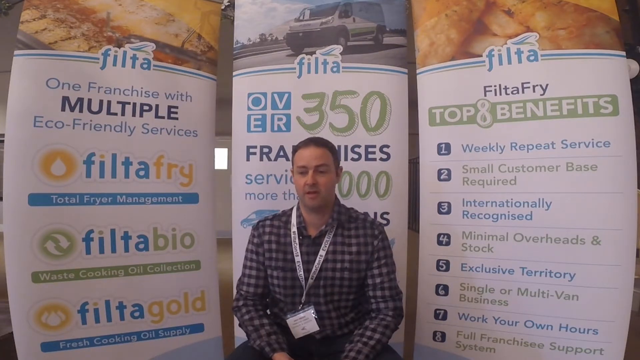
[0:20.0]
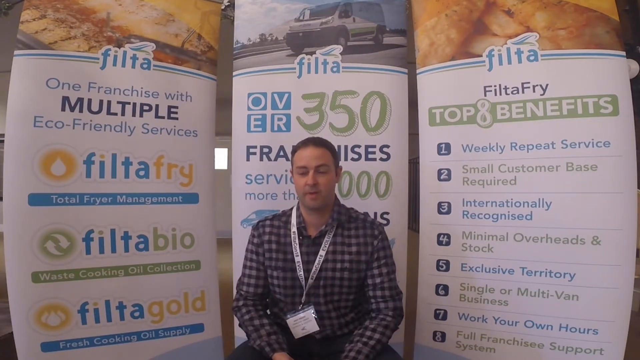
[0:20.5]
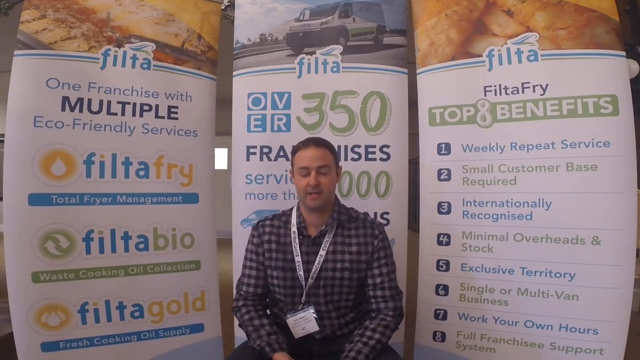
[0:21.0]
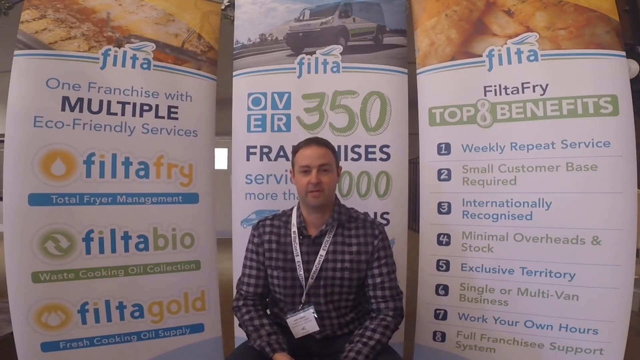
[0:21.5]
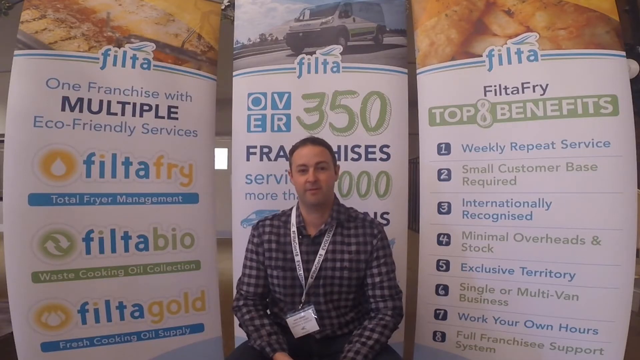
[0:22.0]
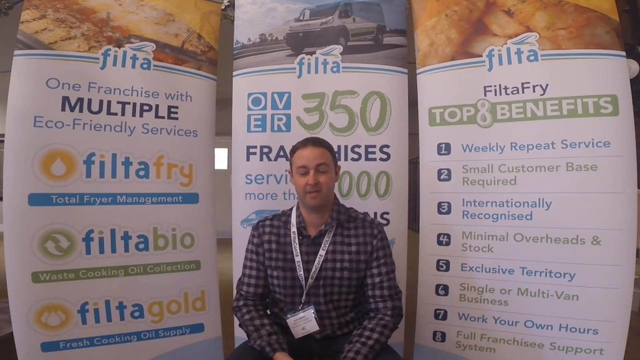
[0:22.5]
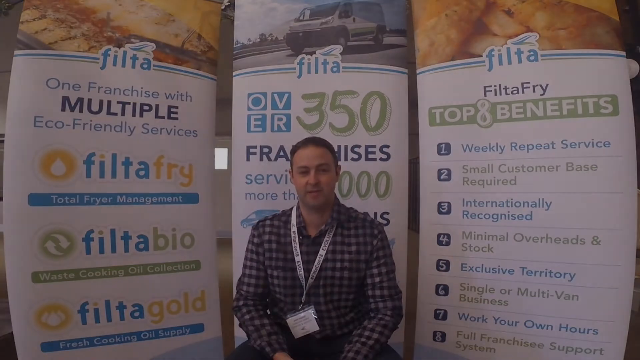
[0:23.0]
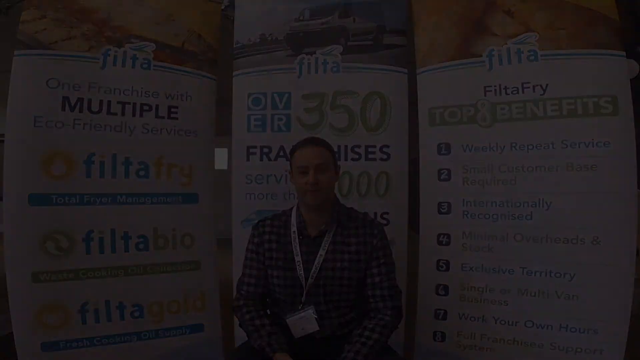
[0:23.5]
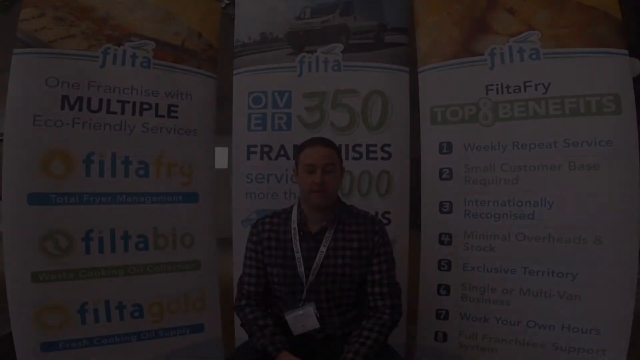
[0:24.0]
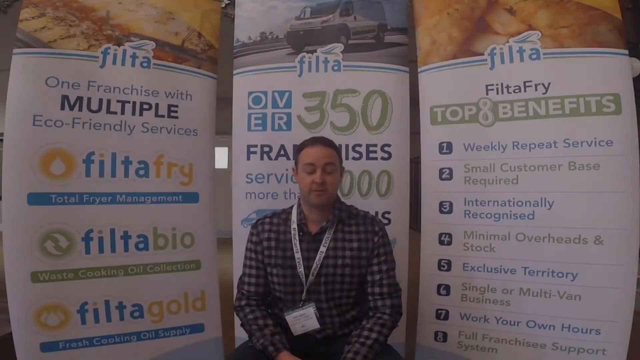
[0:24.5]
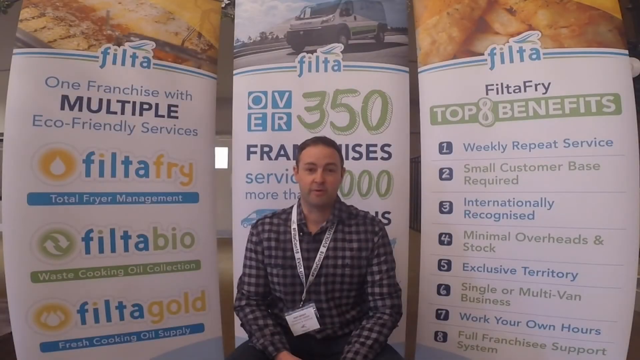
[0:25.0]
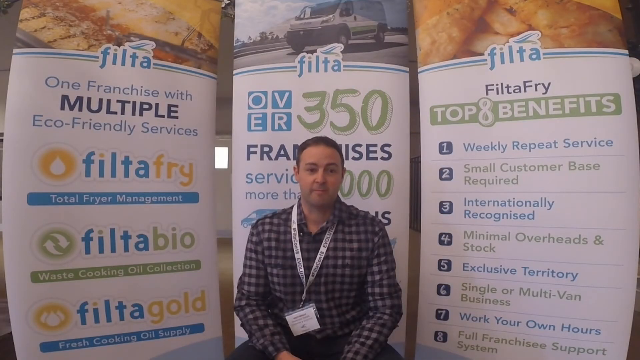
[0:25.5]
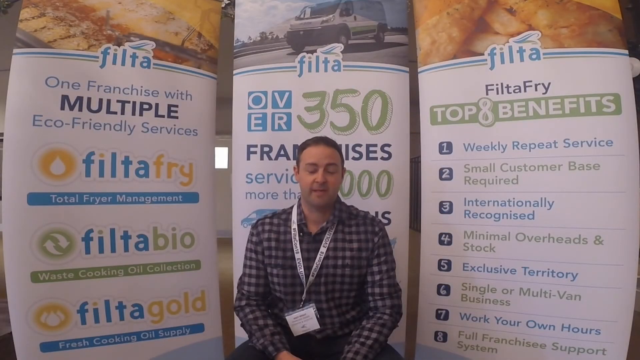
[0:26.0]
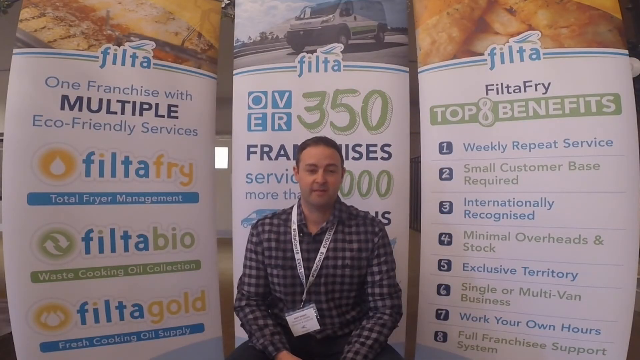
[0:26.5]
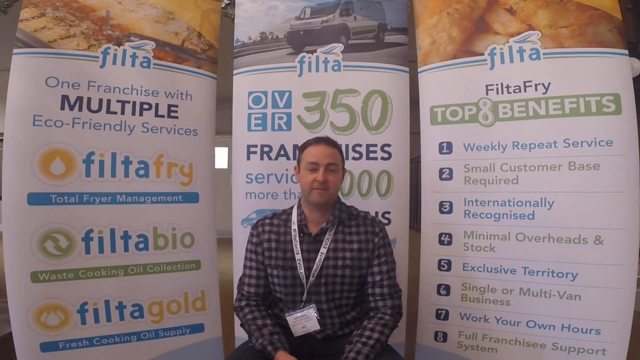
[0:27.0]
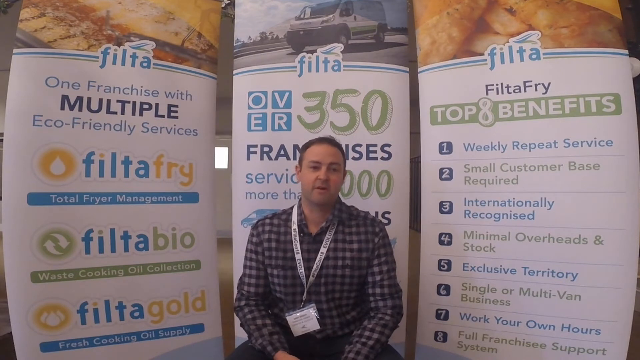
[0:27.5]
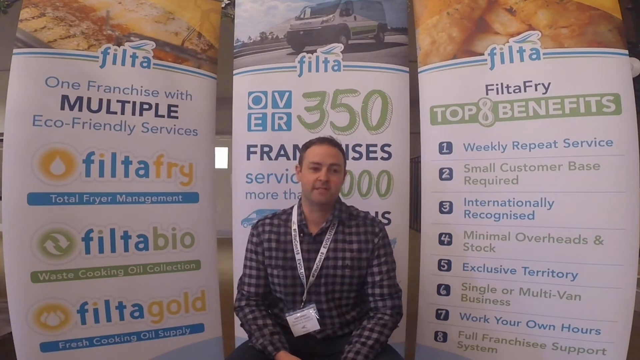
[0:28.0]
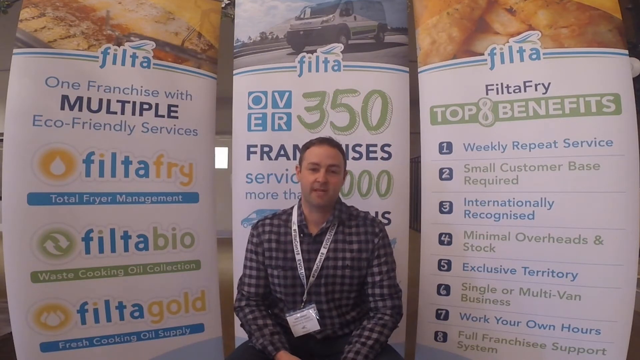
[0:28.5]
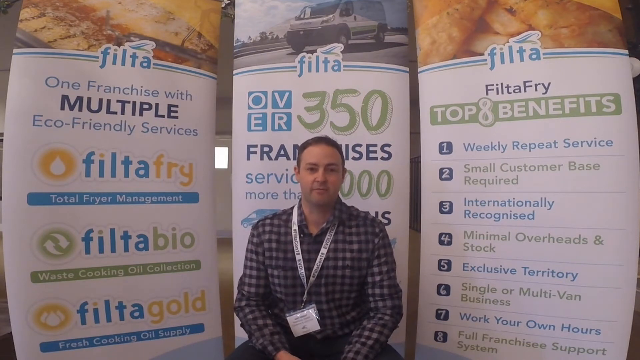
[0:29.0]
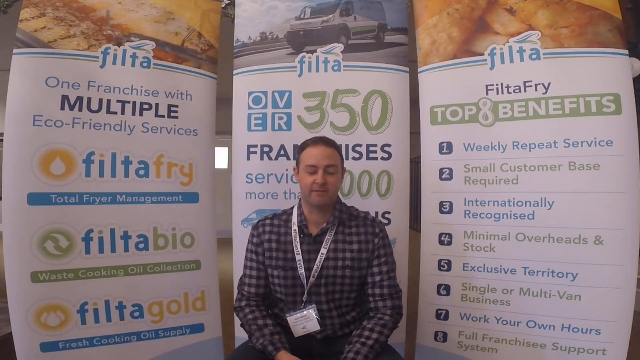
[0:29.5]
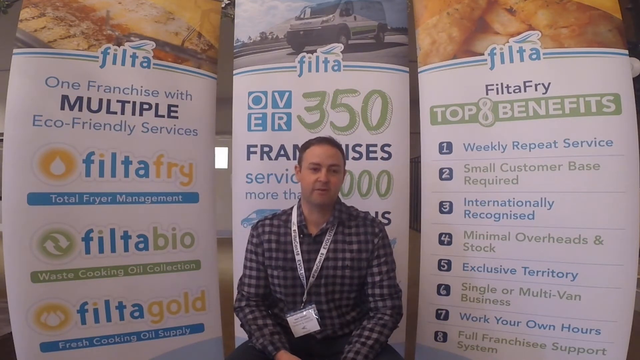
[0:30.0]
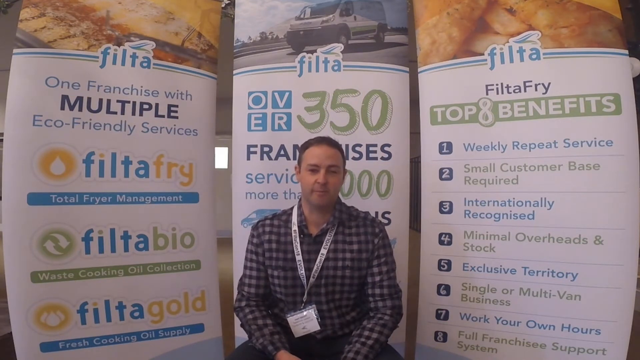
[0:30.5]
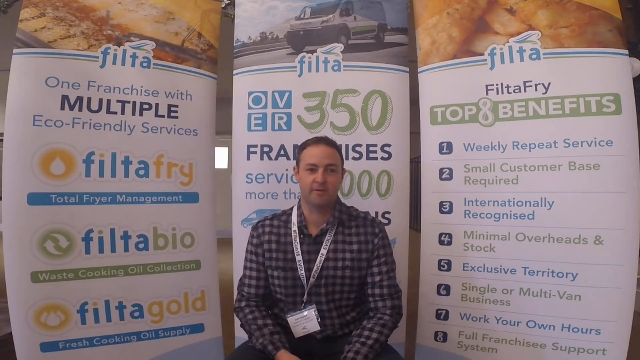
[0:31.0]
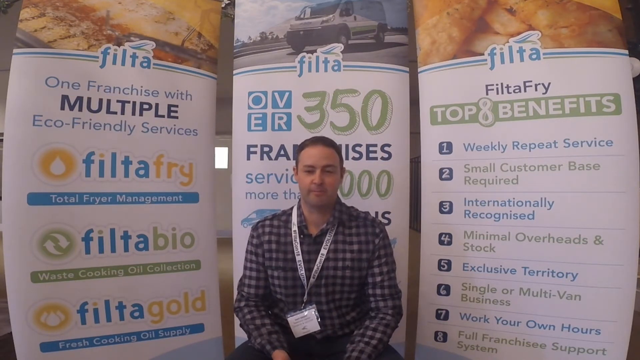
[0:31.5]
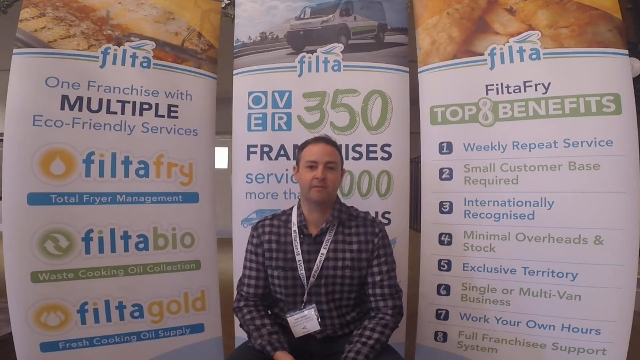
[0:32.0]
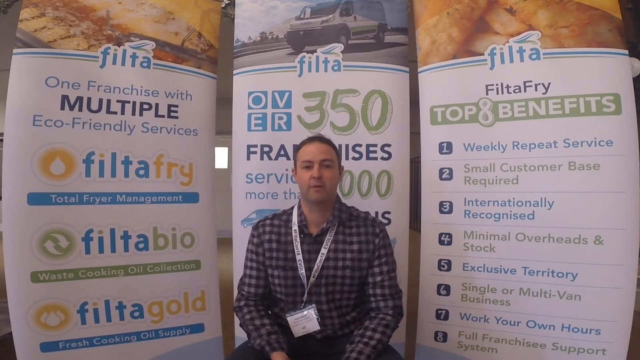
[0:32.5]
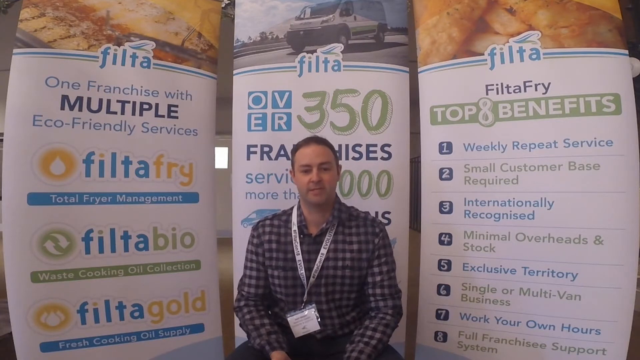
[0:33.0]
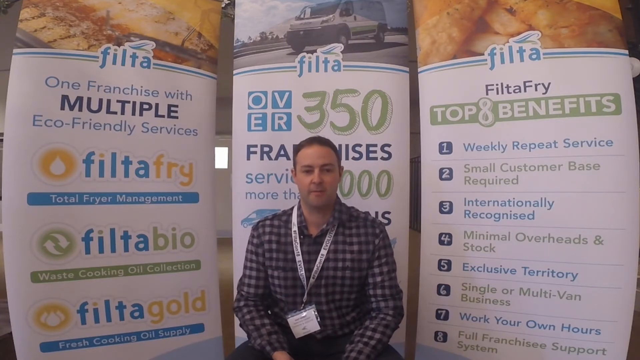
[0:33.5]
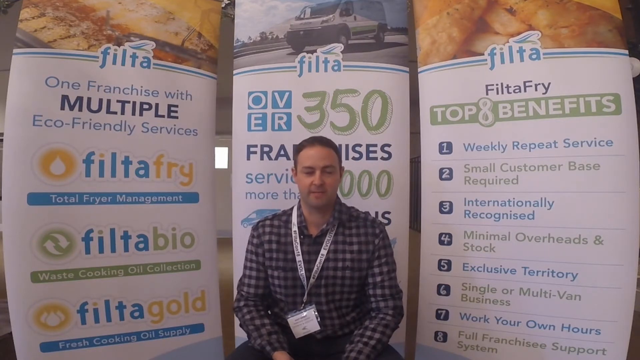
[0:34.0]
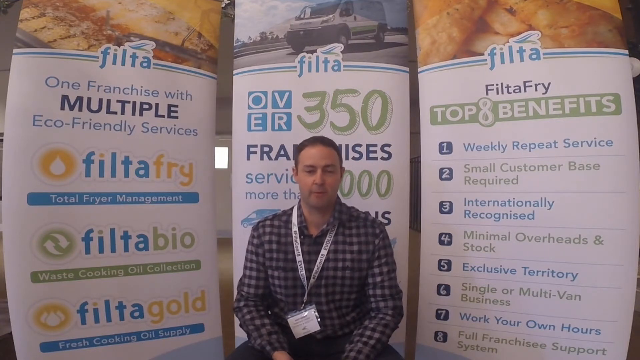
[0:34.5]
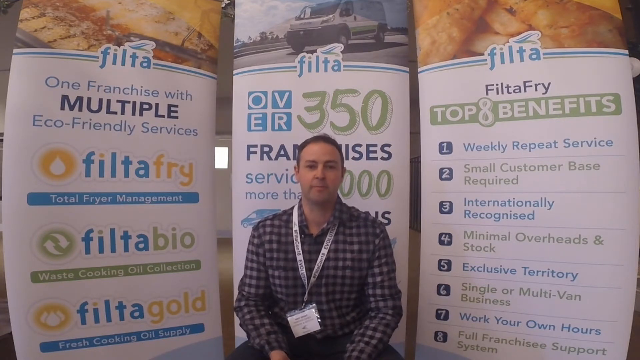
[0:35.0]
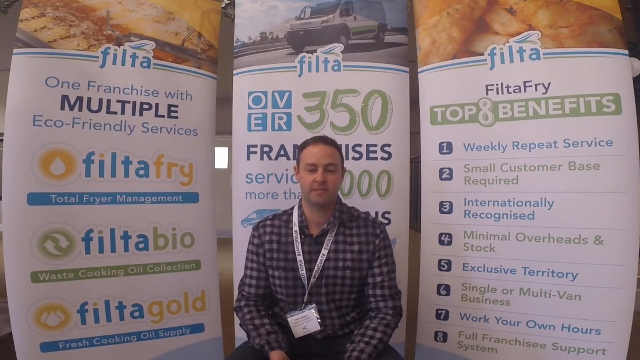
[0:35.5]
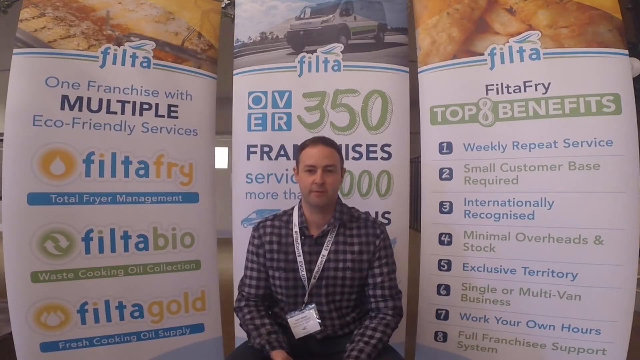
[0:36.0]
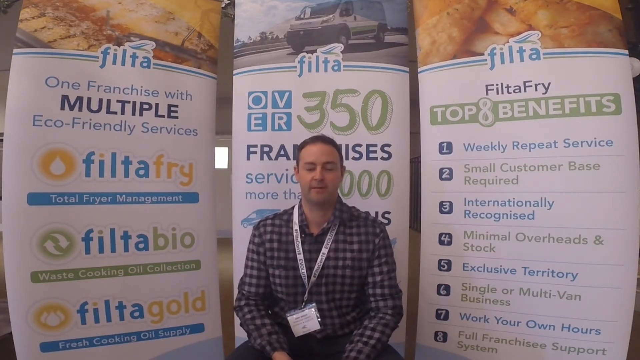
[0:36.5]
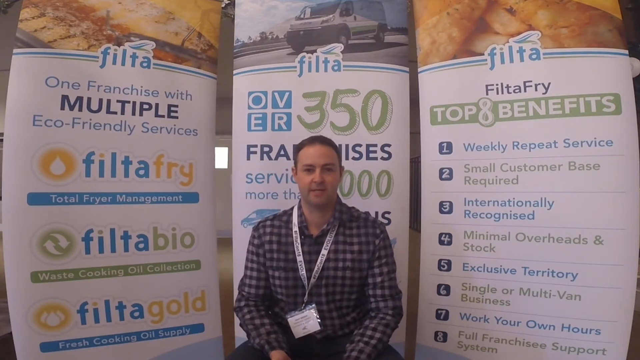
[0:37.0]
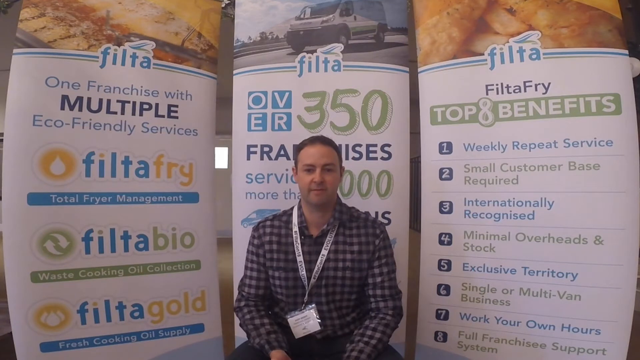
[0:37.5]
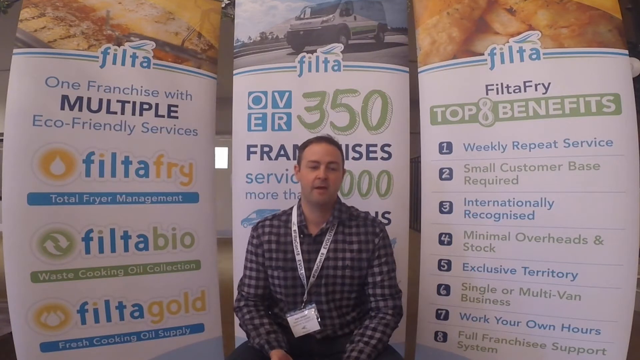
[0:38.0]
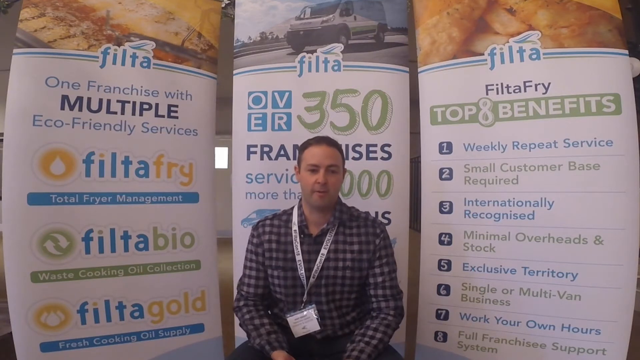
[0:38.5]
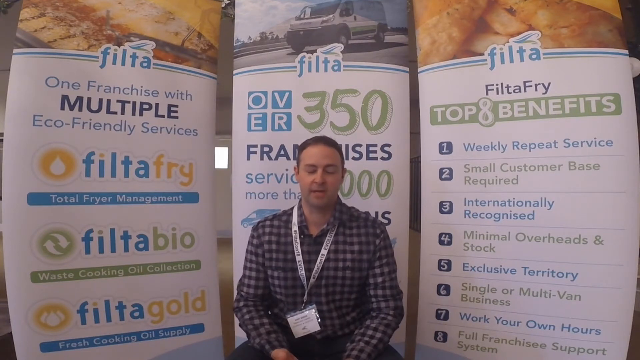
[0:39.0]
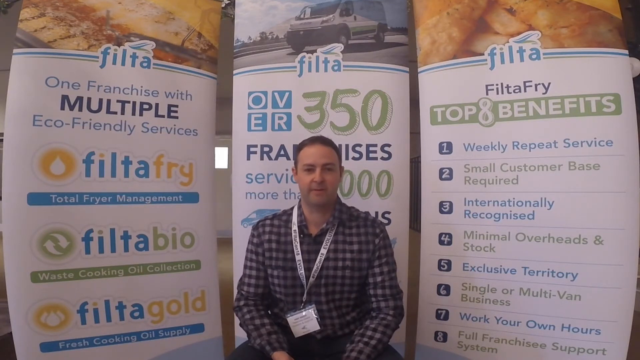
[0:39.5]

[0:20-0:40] Andy Knight, Coventry and Leicester Filtafry franchise owner, continues sitting and talking in front of the backgrounds presenting Filtafry. Nothing else changes: no new text appears and the background stays the same.